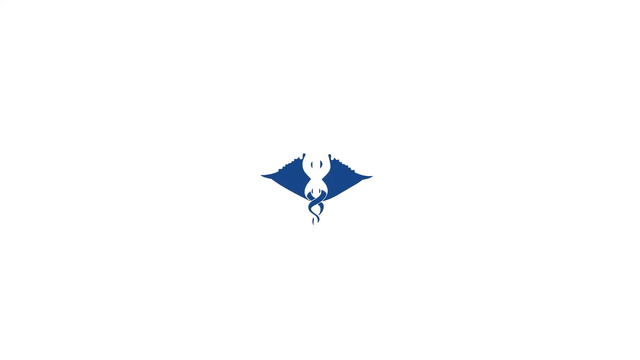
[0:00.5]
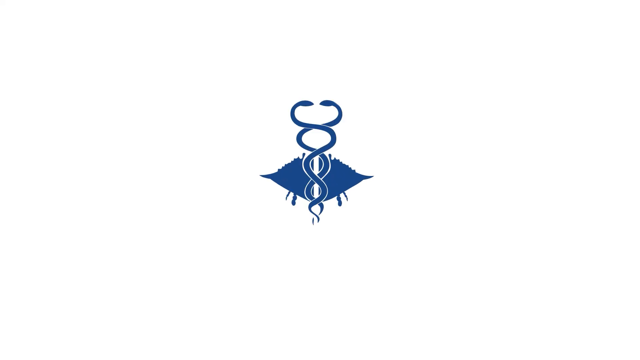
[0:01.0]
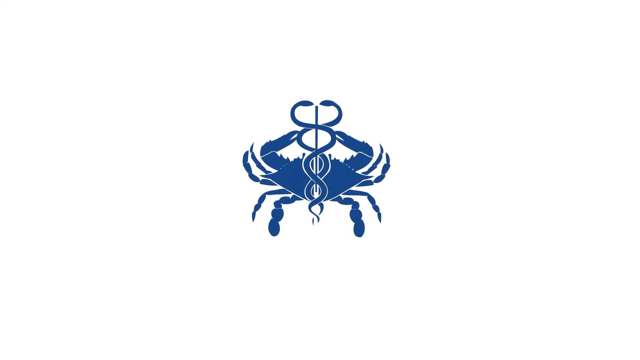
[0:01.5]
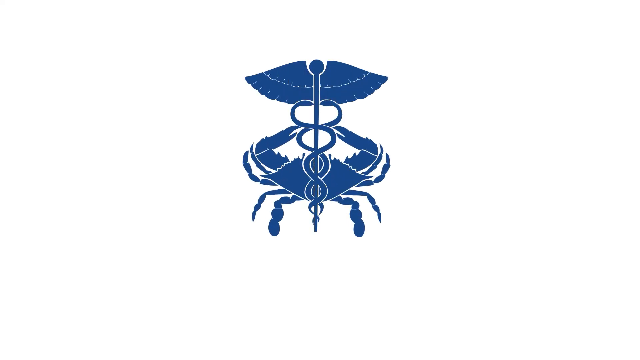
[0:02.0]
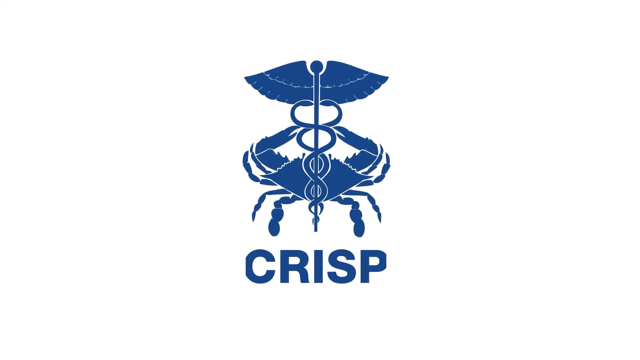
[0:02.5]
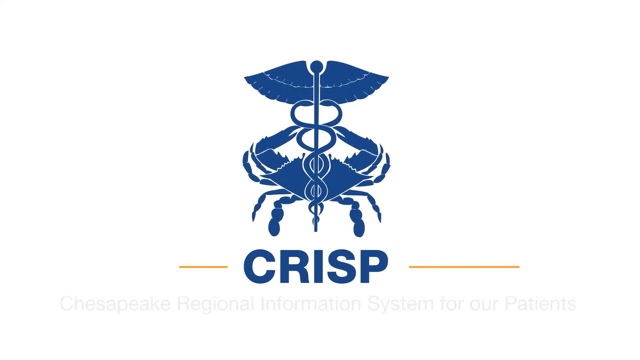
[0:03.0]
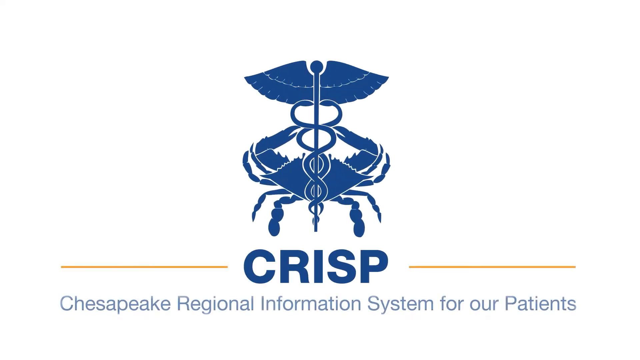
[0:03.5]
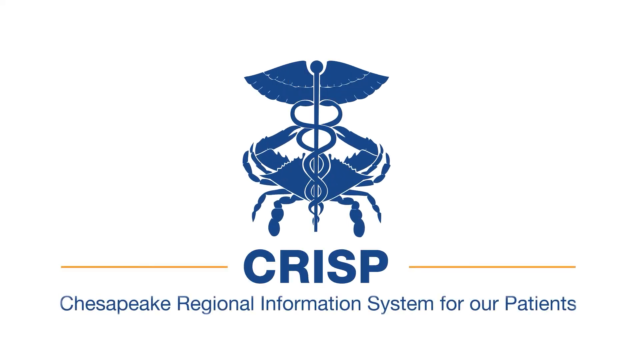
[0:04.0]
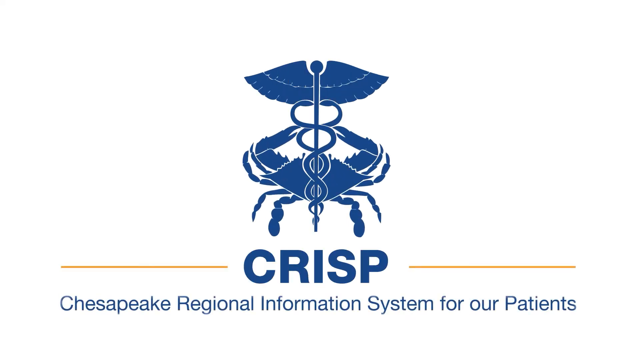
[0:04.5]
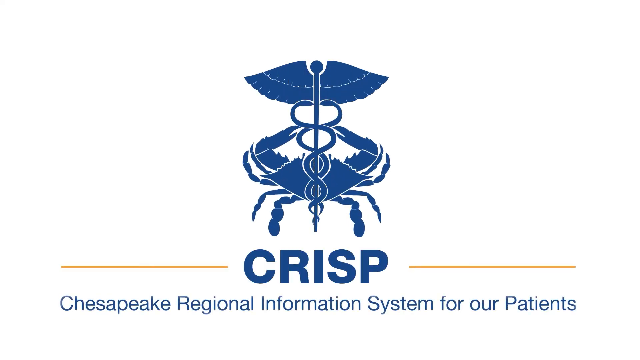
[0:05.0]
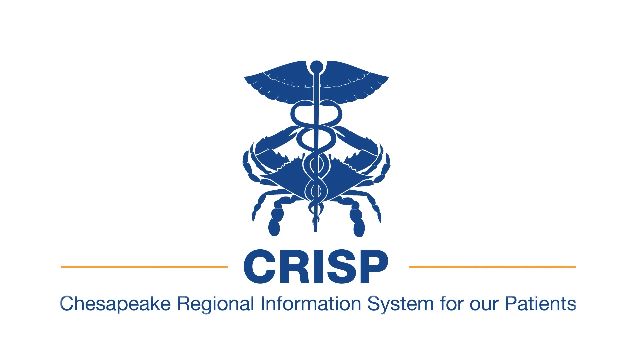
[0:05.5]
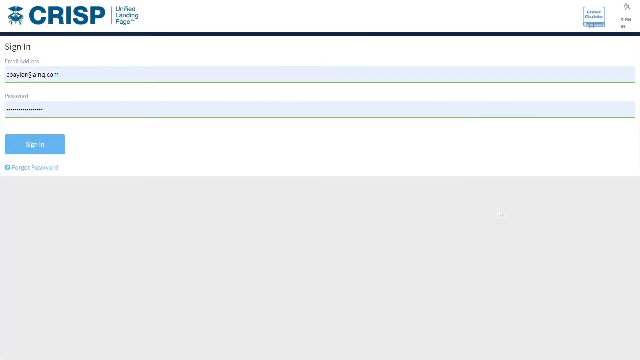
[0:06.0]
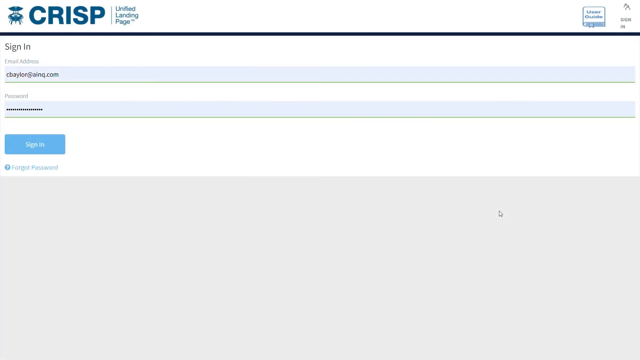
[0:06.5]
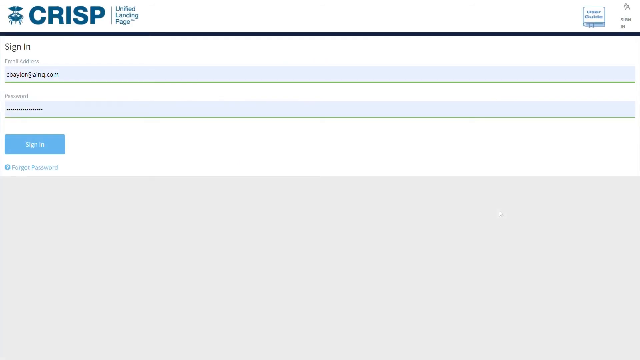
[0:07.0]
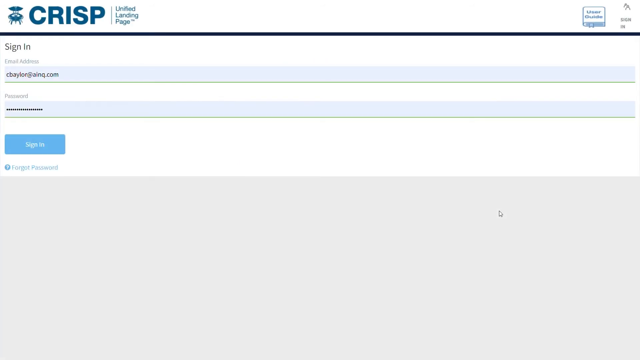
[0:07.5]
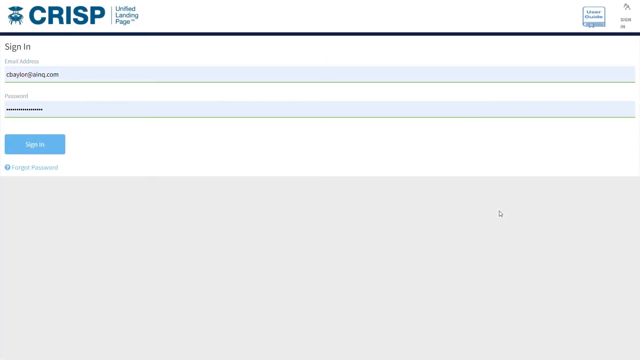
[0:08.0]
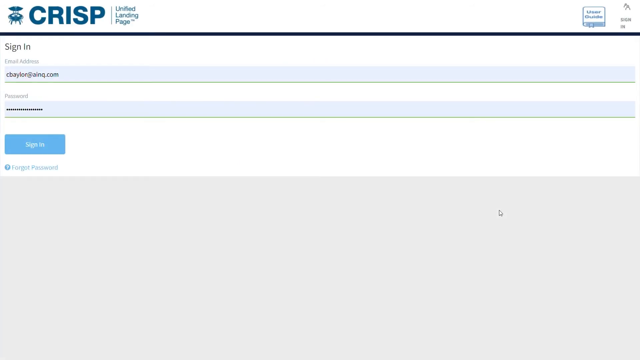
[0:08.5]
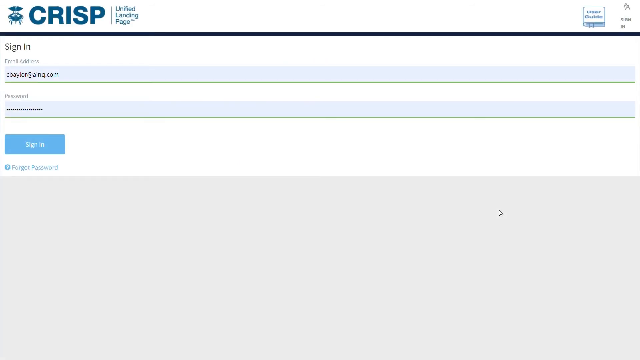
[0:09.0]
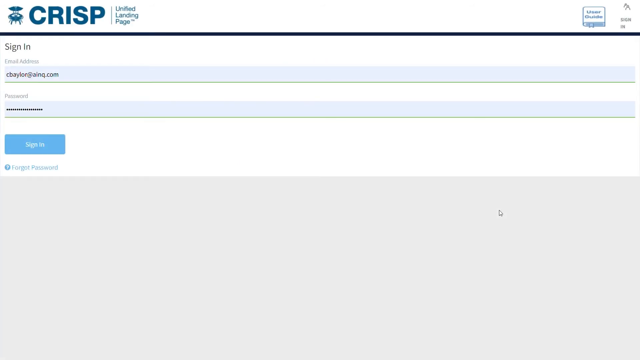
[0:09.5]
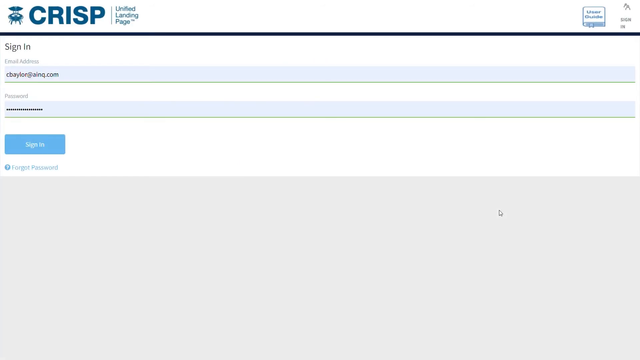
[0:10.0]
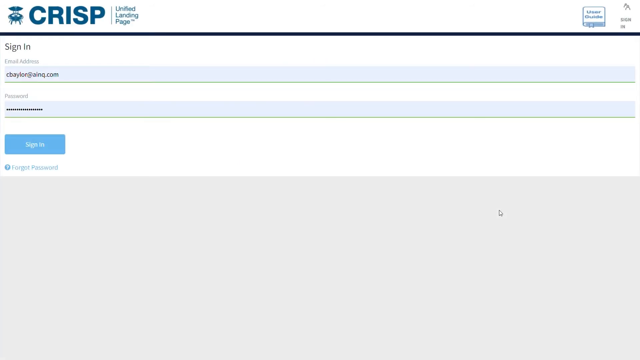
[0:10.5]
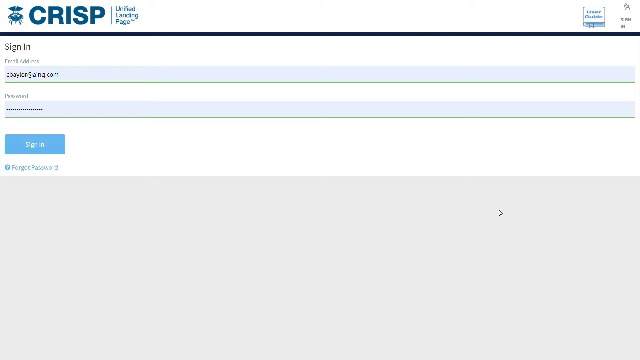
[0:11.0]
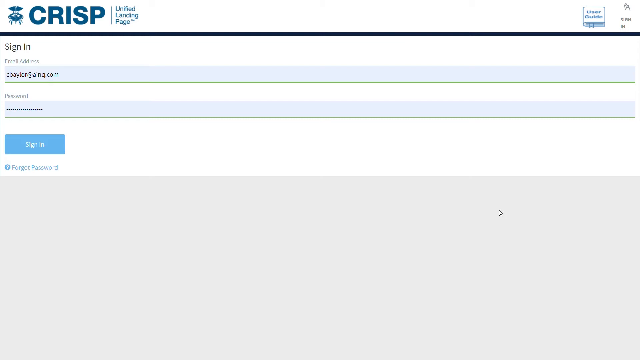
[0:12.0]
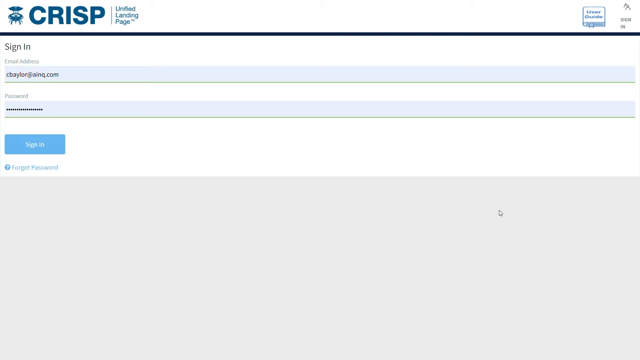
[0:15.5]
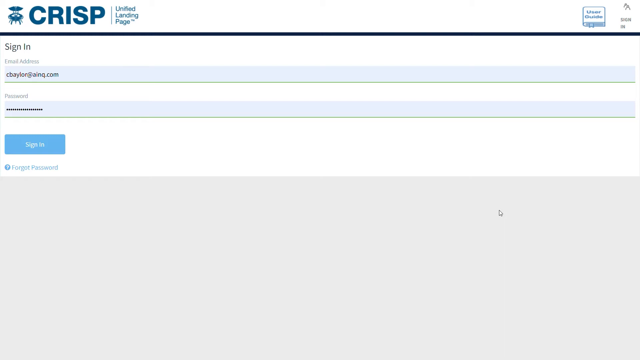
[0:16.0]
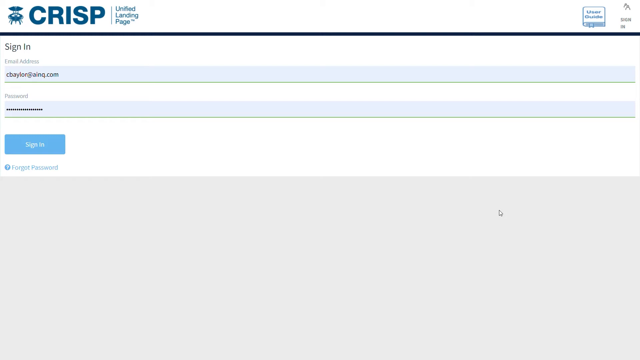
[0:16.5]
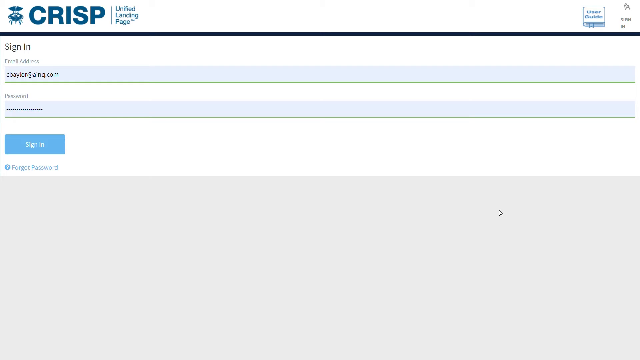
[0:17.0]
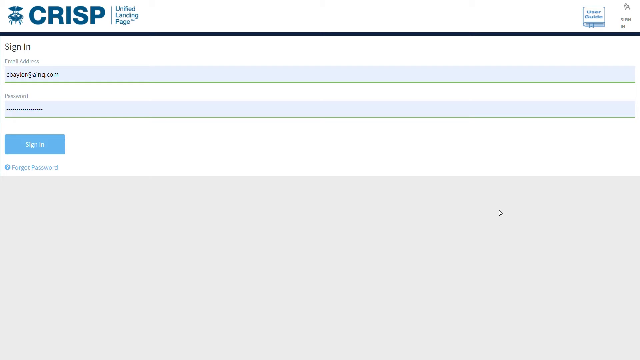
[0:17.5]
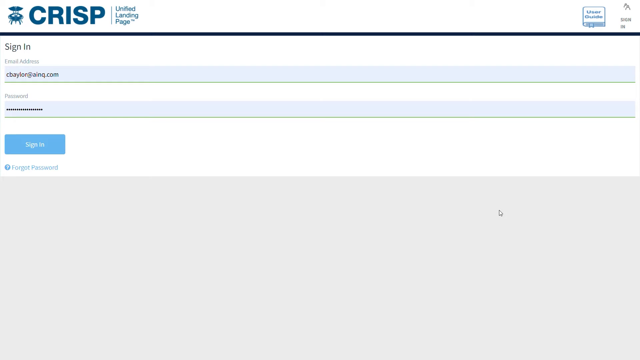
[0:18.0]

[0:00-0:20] A heart symbol with a crab, in blue against a white background, appears along with wings, and the word "Crisp" (C-R-I-S-P) is at the bottom. Text reads "Chesapeake Regional Information System for our Patients." The video then moves to a sign-in page showing name and password fields, which are obscured, and a "Sign in" button; the bottom of the page is blank. The page reads "United Landing Page" and "sign-in," with a few other items. The page is somewhat bluish: some of the writing is in blue and some things are highlighted in blue. The video then goes to a blank page.